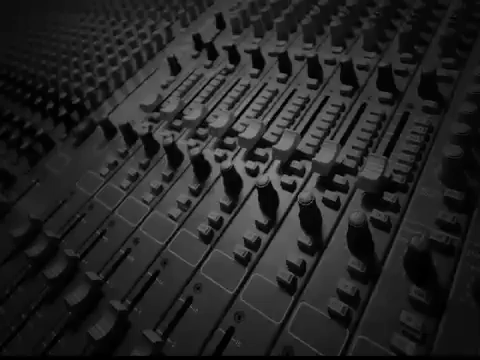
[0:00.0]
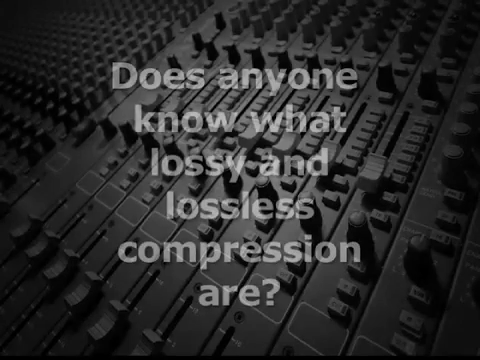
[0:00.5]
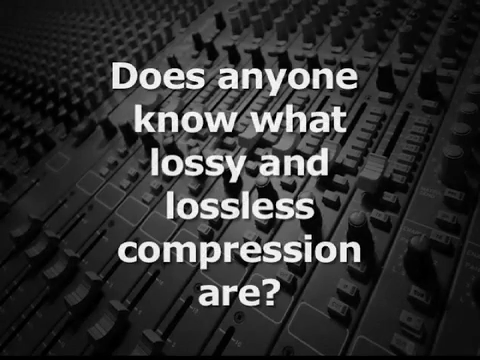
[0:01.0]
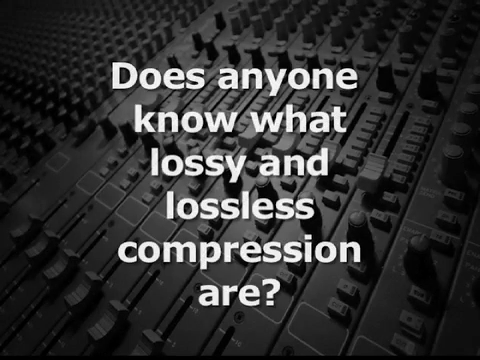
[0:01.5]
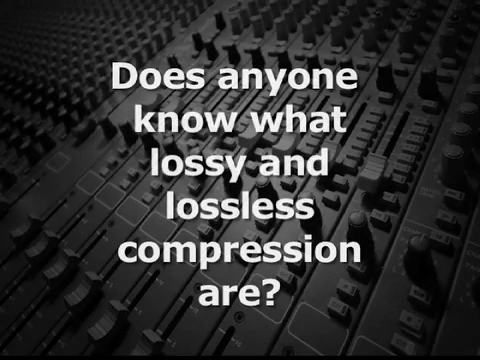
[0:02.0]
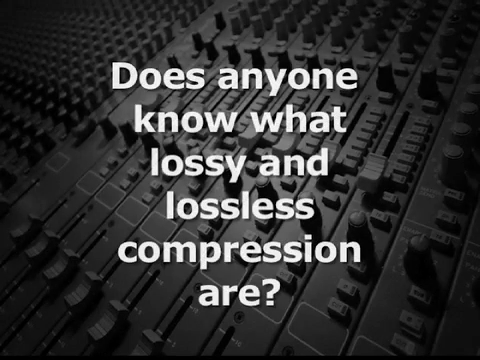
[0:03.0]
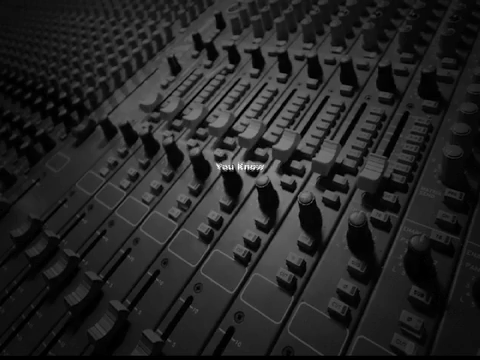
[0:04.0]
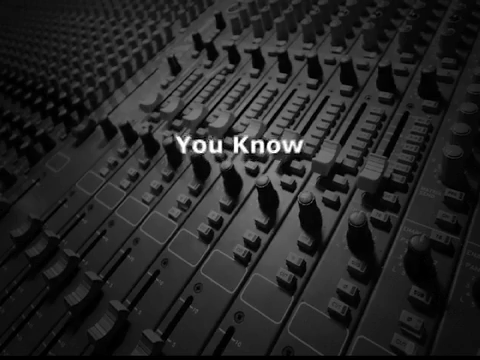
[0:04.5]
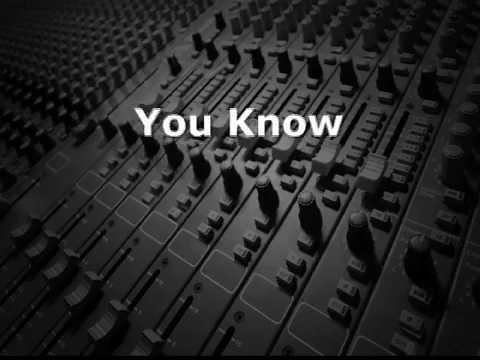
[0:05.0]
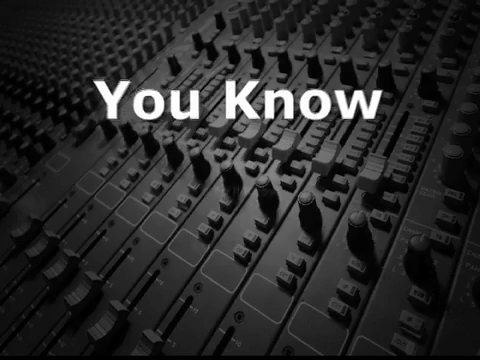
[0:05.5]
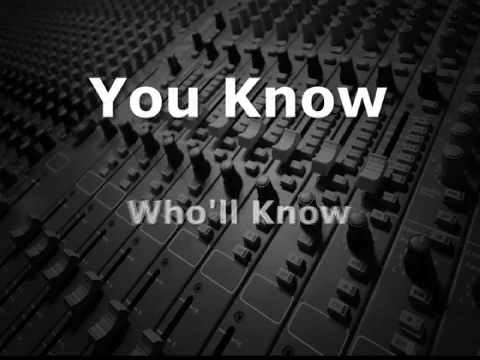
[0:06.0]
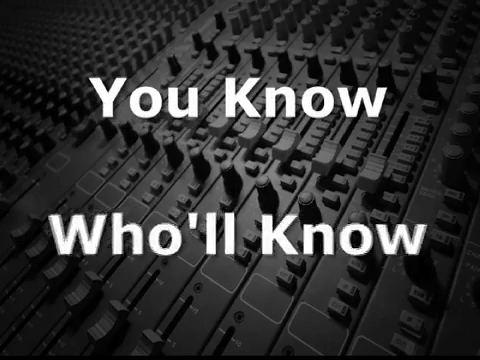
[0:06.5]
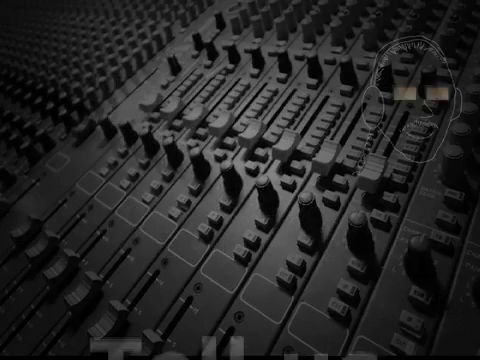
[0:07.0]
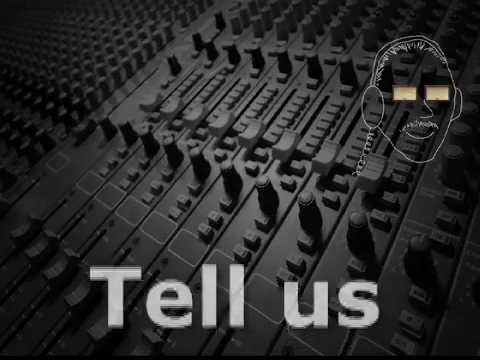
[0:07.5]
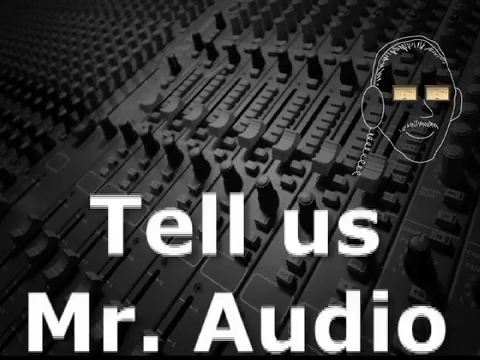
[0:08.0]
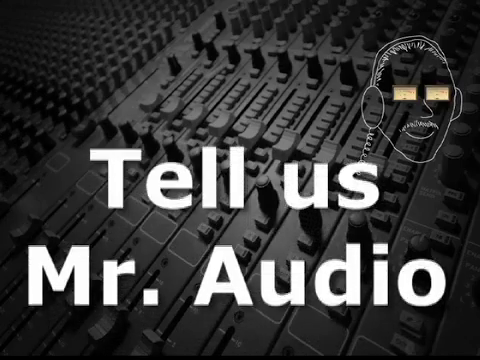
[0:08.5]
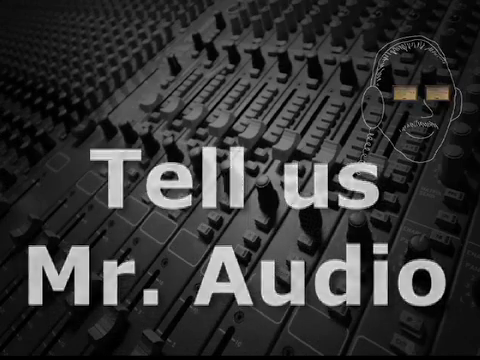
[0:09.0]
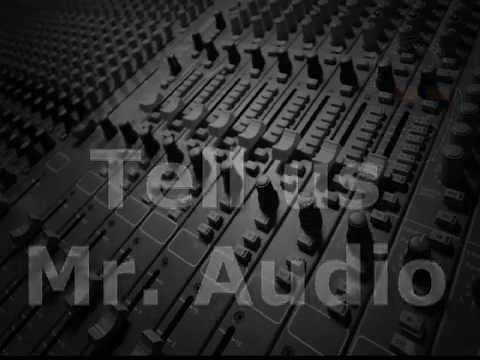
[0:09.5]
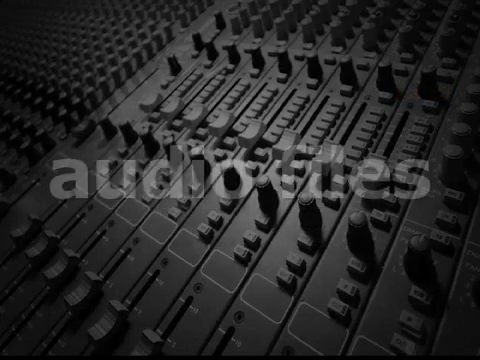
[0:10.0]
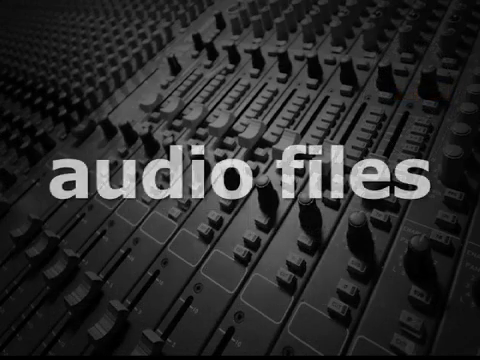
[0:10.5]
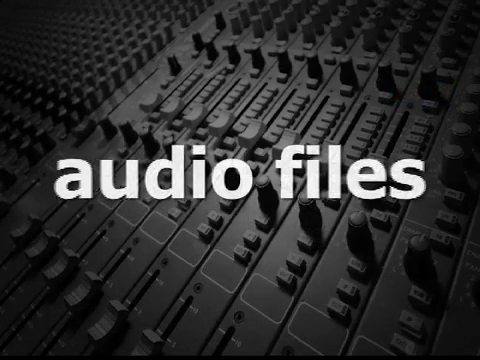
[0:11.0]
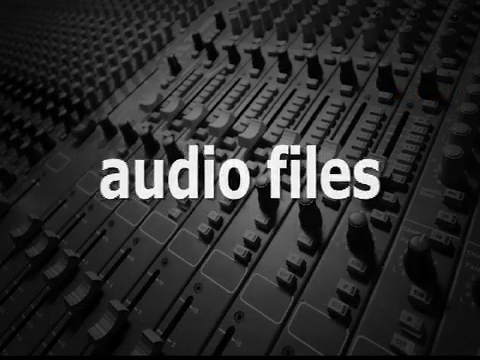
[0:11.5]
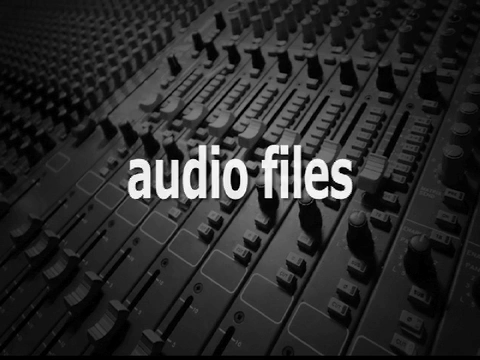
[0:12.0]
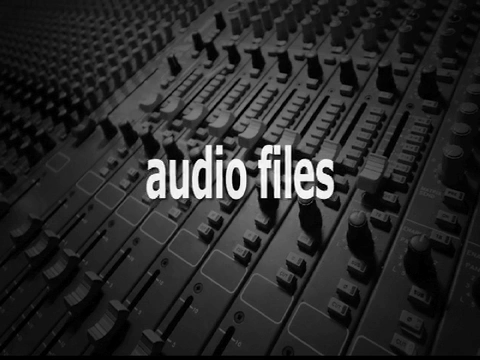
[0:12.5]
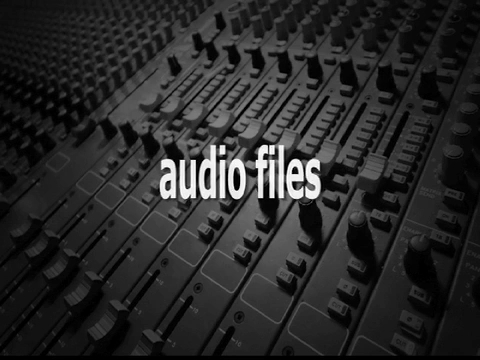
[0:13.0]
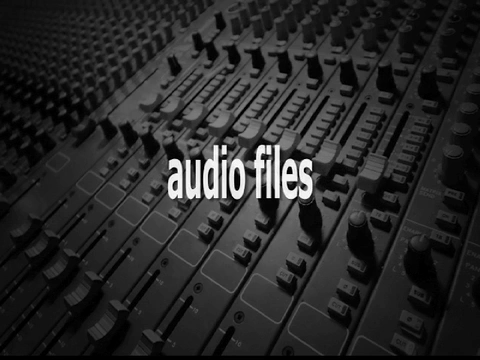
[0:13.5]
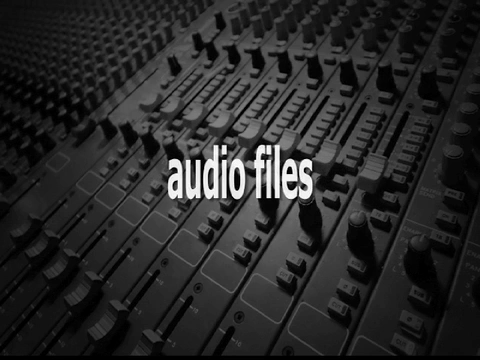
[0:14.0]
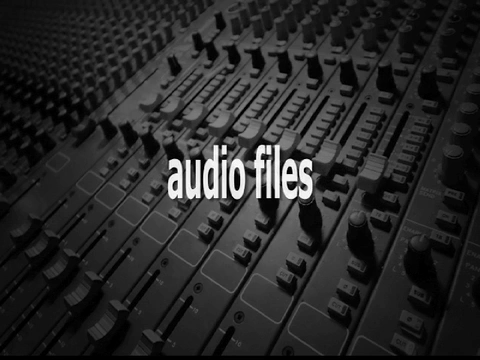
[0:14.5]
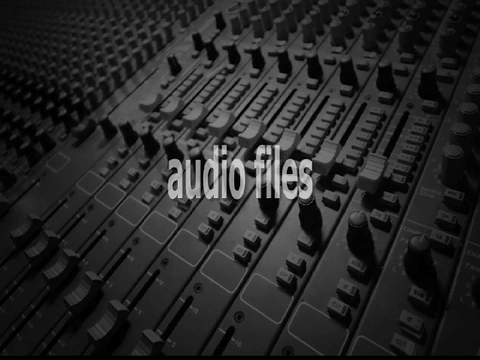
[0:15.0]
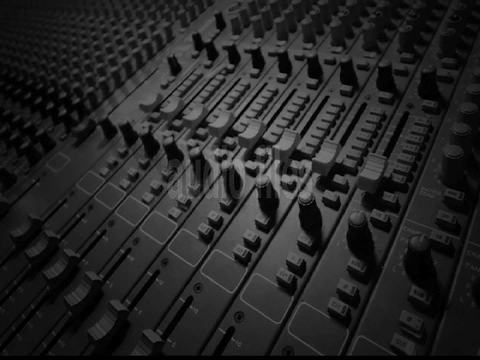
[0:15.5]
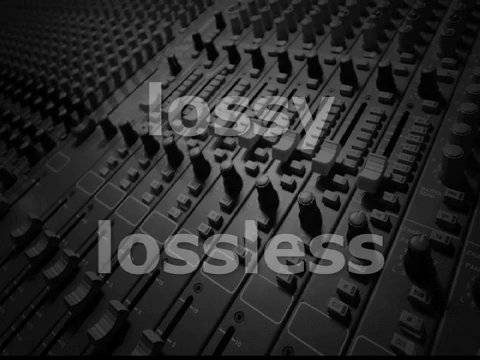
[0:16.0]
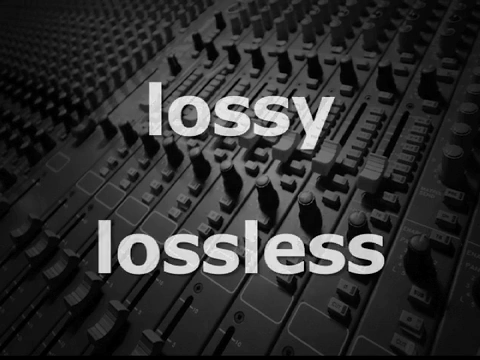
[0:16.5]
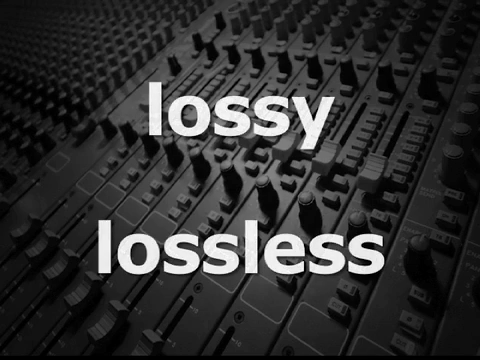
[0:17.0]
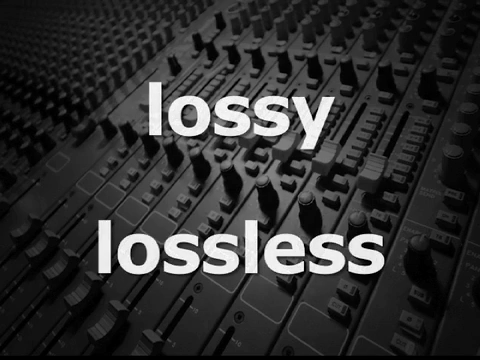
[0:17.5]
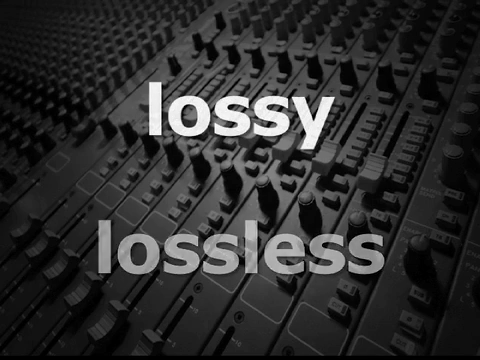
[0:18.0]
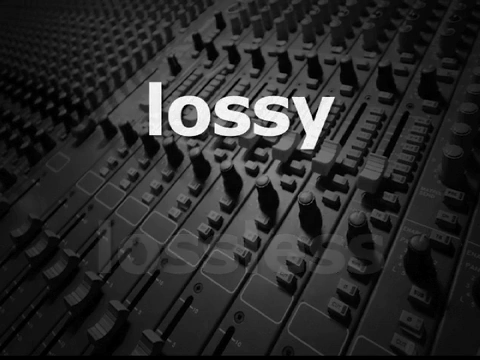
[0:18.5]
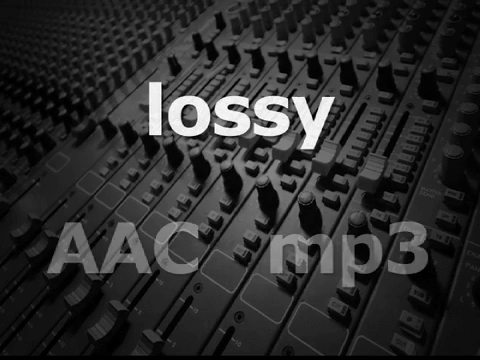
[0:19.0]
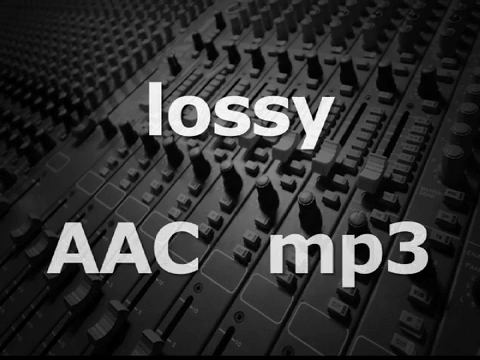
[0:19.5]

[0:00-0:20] The video opens on what looks like an equalizer, the kind seen in a professional studio. The equalizer is all black and seems to have a filter on it, since only black colors are visible. It has multiple buttons and is turned toward the lower left of the frame, with a black, almost gradient hue around the edges. Wording fades in, center-justified in white font: "Does anyone know what lossy and lossless compressions are?" followed by a question mark. It fades away and more wording comes in from the center of the screen: "You know who'll know." Then wording scrolls up from the bottom of the screen: "Tell us, Mr. Audio." Next, wording comes in to the center of the image reading "audiophiles"; it kind of retracts into itself, getting smaller and smaller until it reaches a certain size, and then disappears.